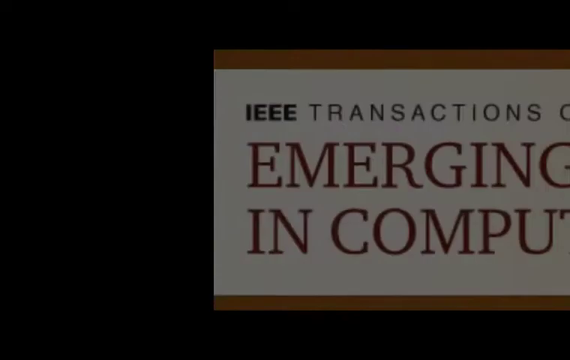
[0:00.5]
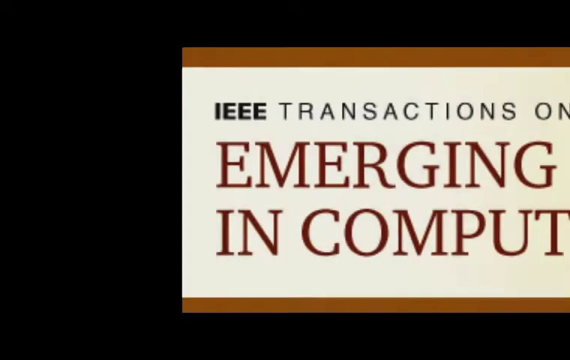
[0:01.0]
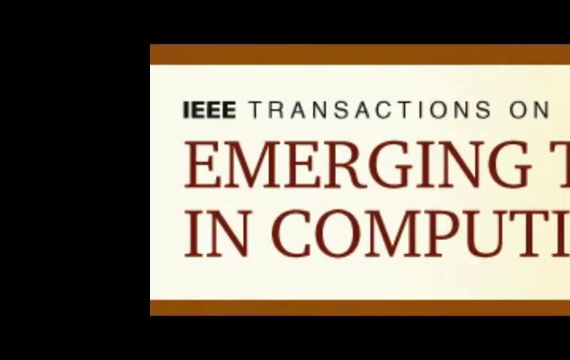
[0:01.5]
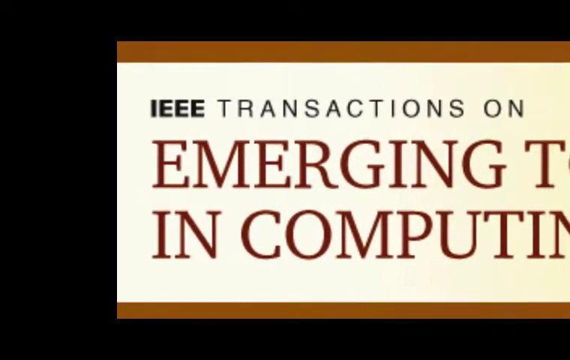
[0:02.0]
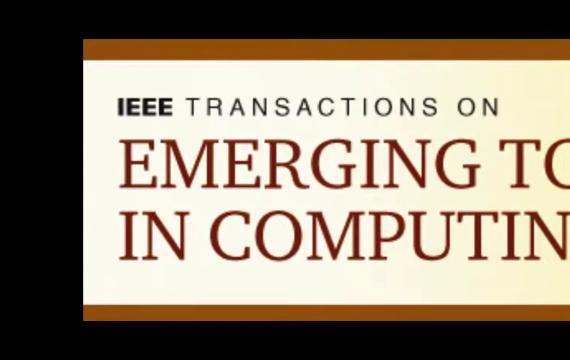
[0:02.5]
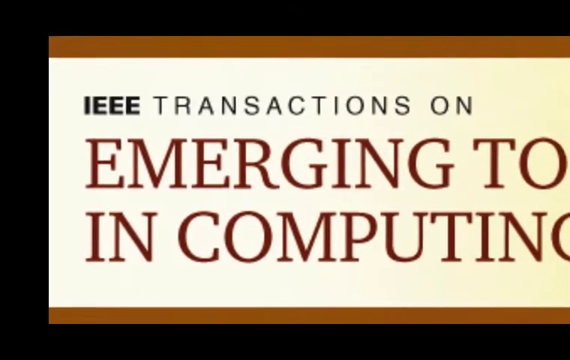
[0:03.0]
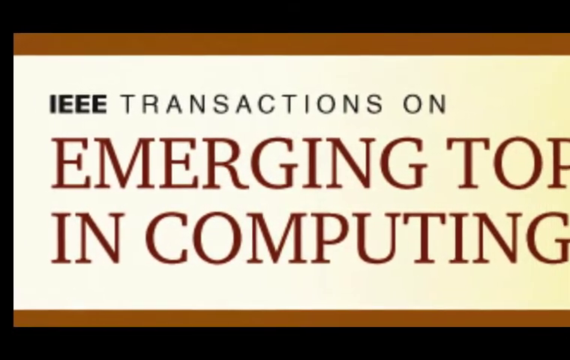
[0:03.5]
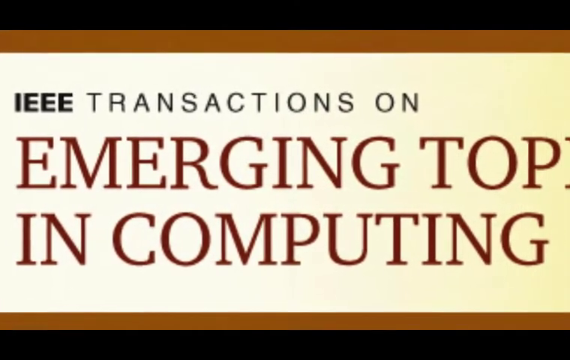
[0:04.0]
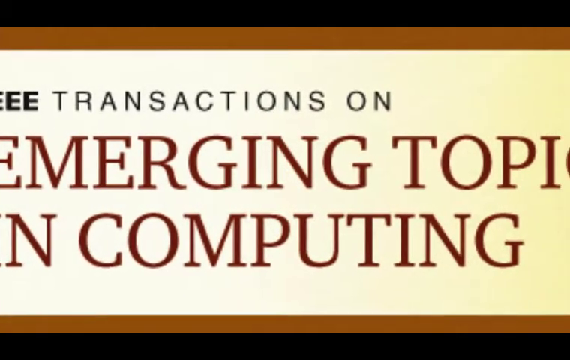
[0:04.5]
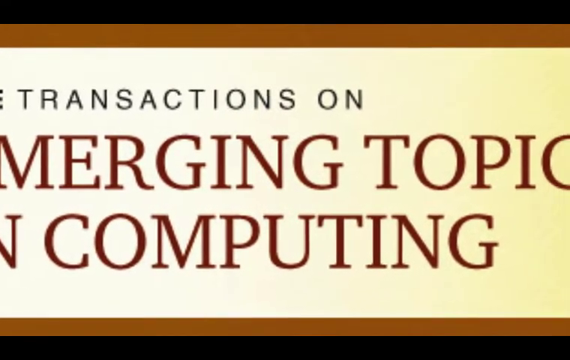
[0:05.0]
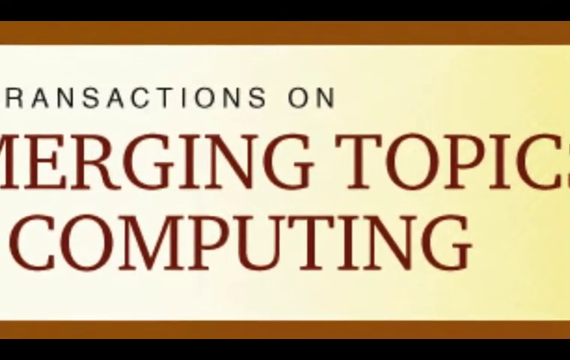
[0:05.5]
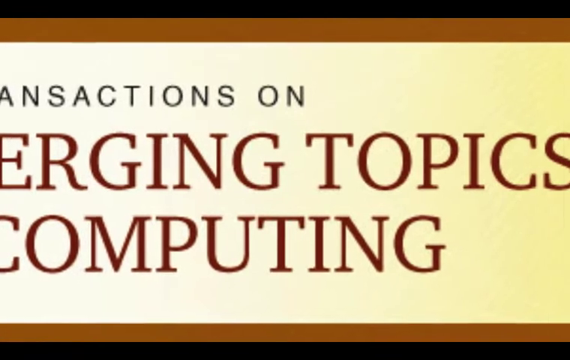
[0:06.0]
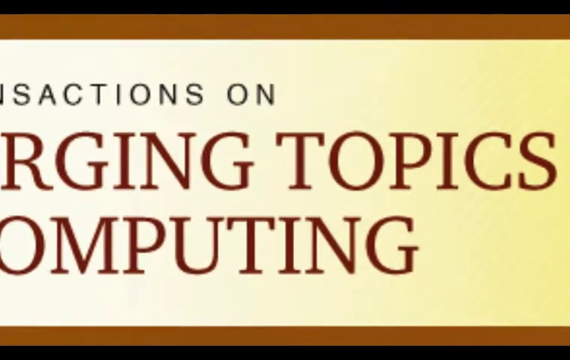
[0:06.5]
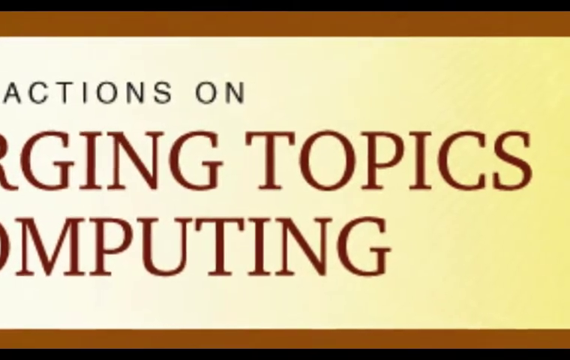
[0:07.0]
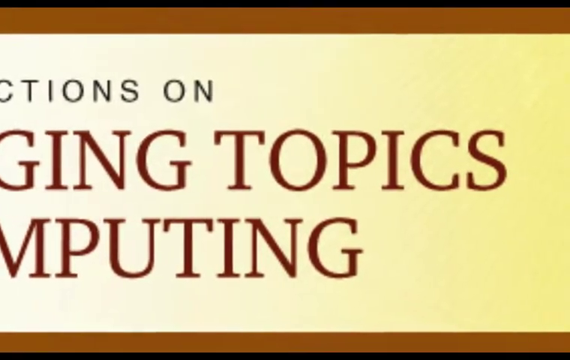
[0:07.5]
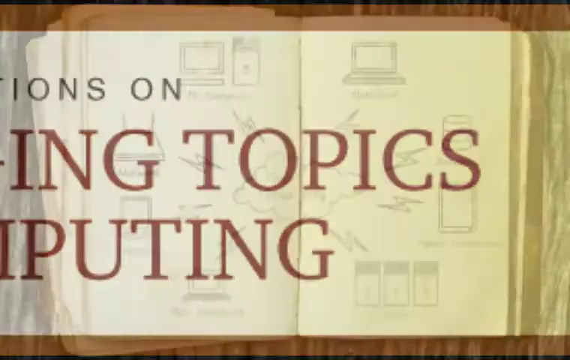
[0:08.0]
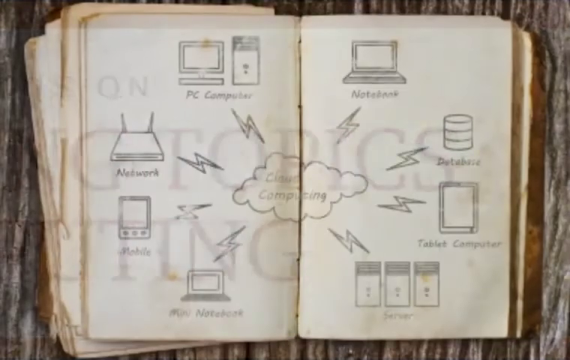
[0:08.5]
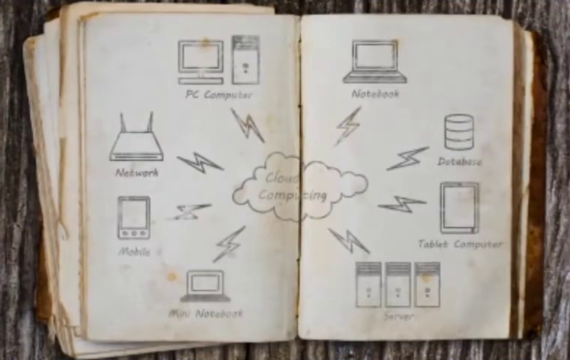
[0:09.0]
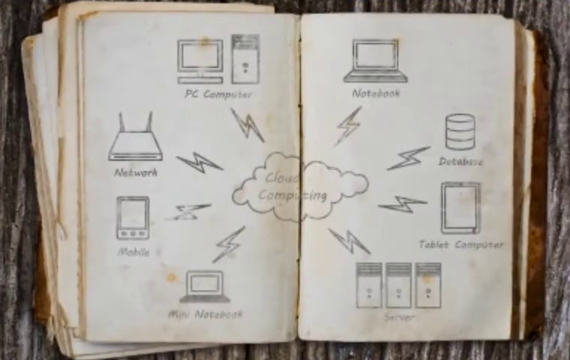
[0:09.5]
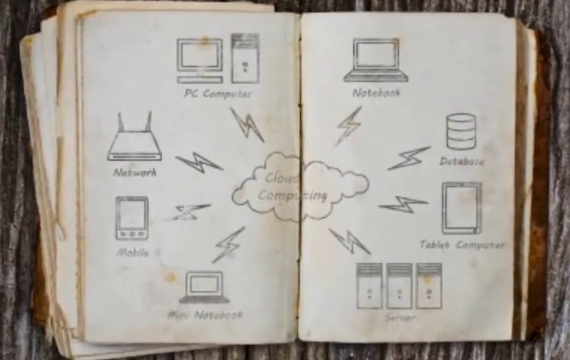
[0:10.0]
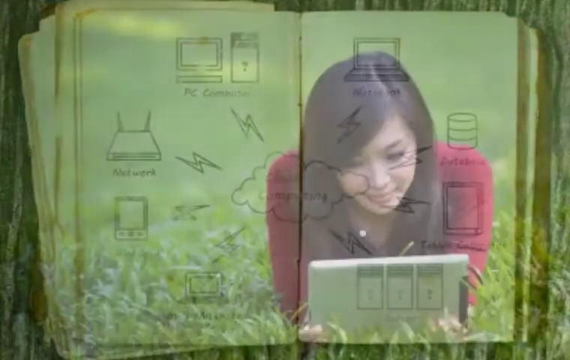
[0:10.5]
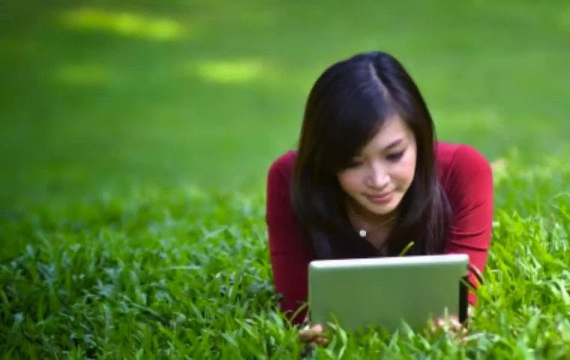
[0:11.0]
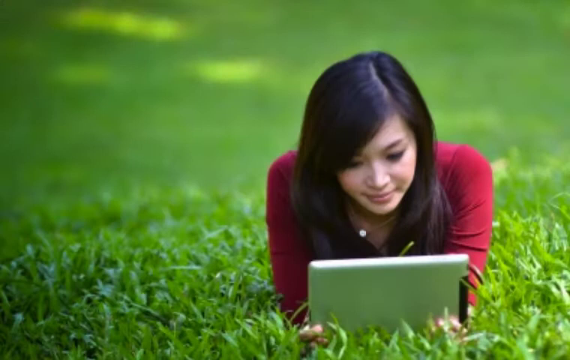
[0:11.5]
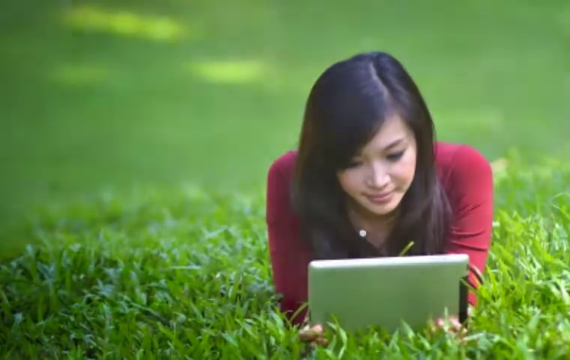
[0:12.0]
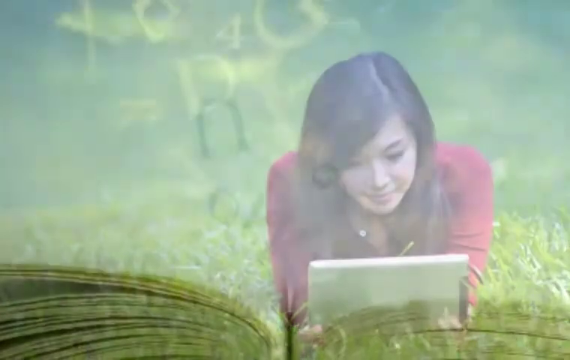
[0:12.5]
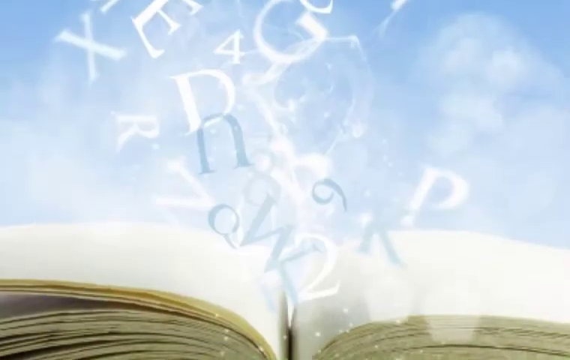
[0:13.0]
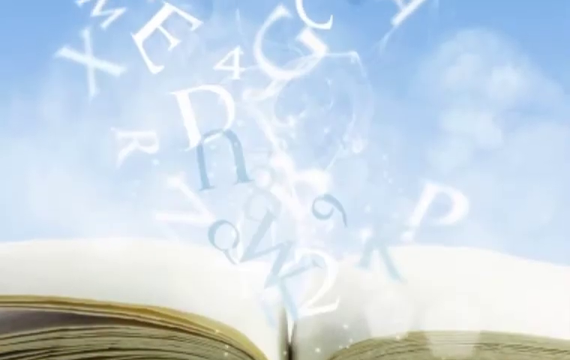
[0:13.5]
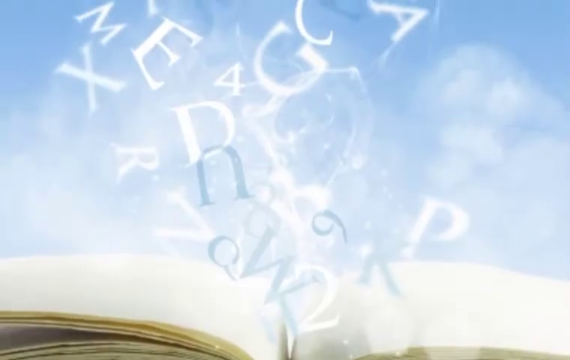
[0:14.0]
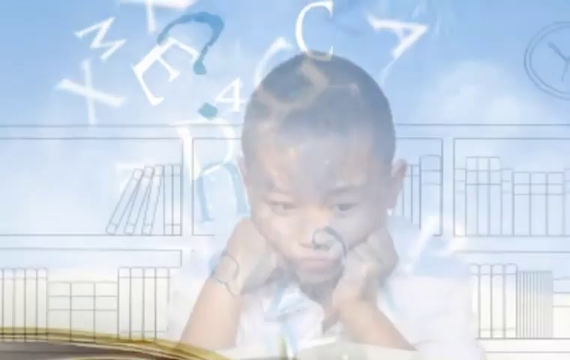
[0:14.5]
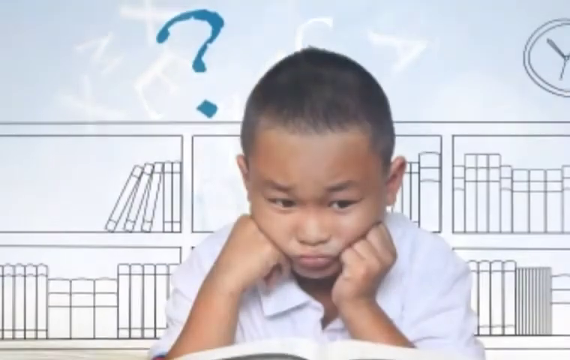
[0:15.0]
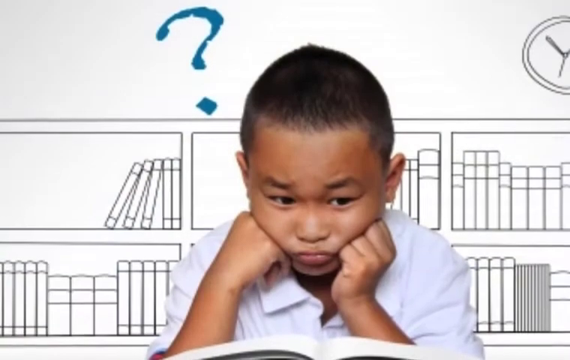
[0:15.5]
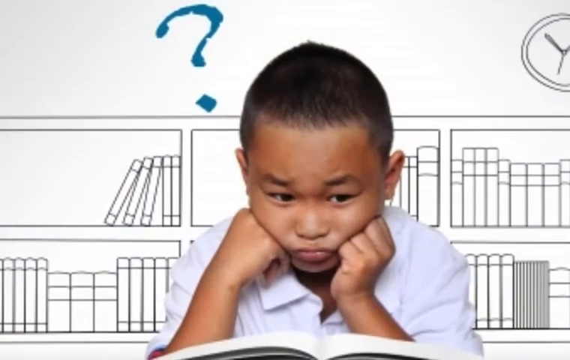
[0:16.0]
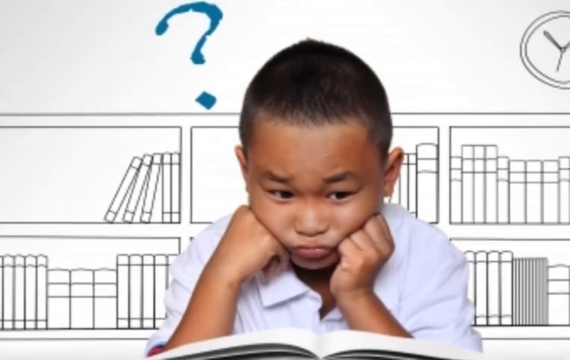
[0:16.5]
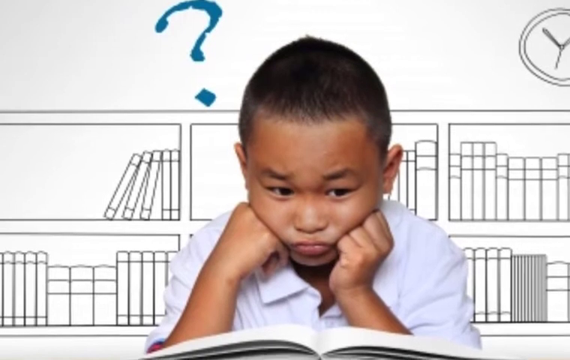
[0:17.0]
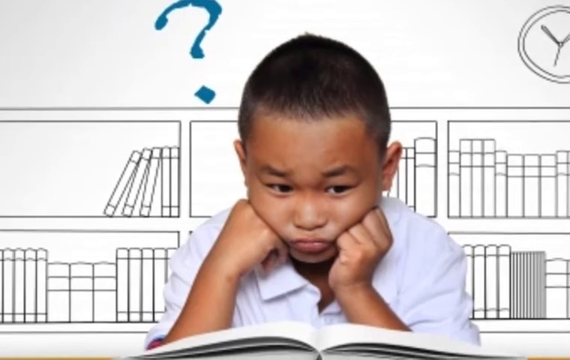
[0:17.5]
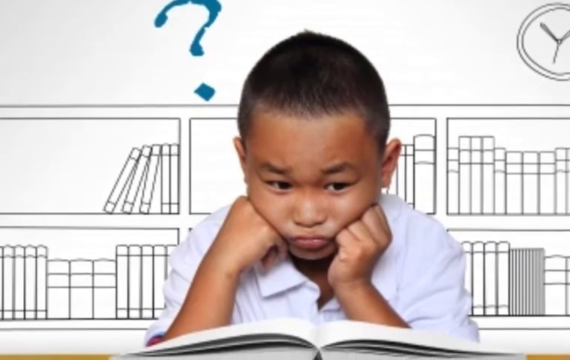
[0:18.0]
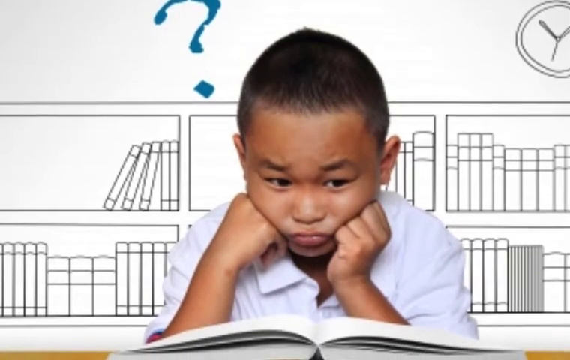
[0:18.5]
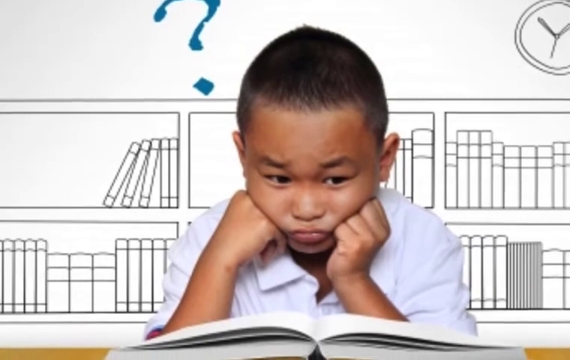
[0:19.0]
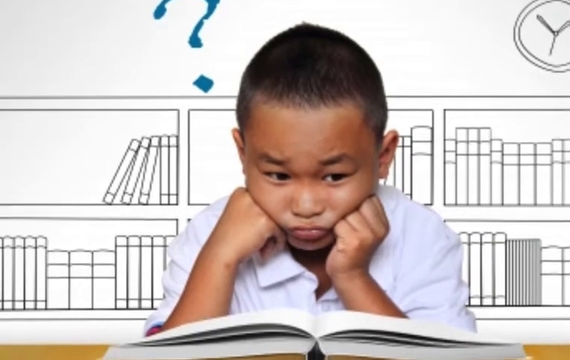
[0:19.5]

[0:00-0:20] The video opens with a target that has writing on top about transactions in computing. Next come images of a computer, a PC, a network sign and a mobile surrounding a target with "cloud computing" written in the middle. All of these drawings are in a very old book. A lady then lies on the ground wearing a red top, holding a laptop, smiling and watching it. Next, some letters appear in the sky, followed by a boy who looks troubled with a question mark above his head. Behind him are a sketched bookshelf and a sketched clock on the wall. He holds his cheek, appearing troubled and seemingly thinking about something. Then a signpost shows different directions: one sign reads "yesterday", and another is between today and tomorrow.